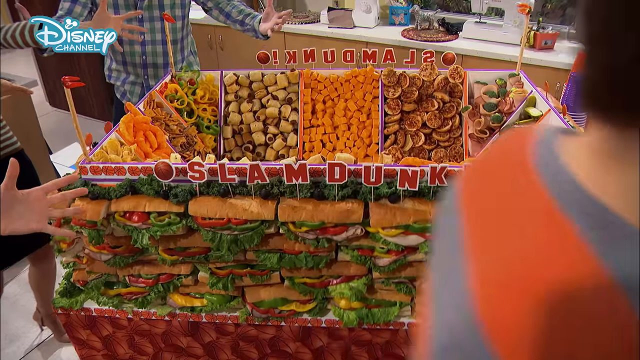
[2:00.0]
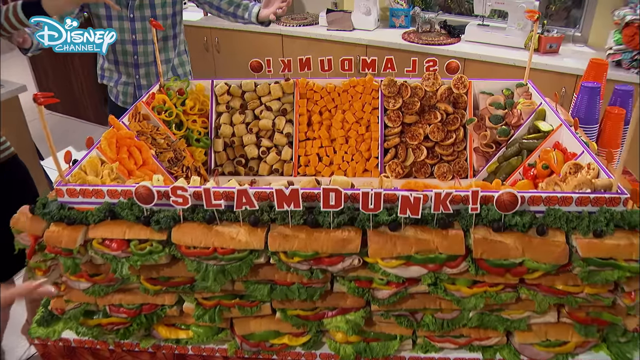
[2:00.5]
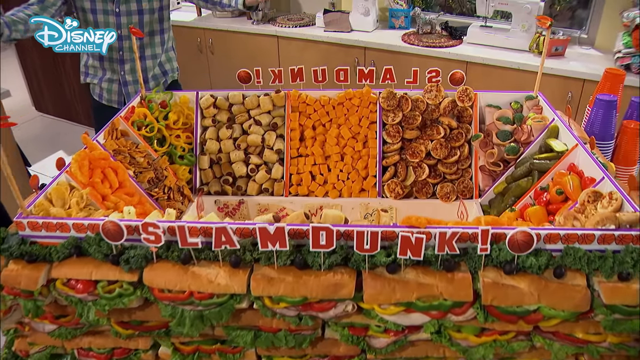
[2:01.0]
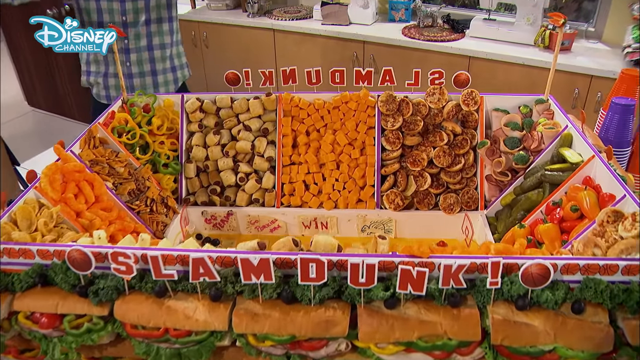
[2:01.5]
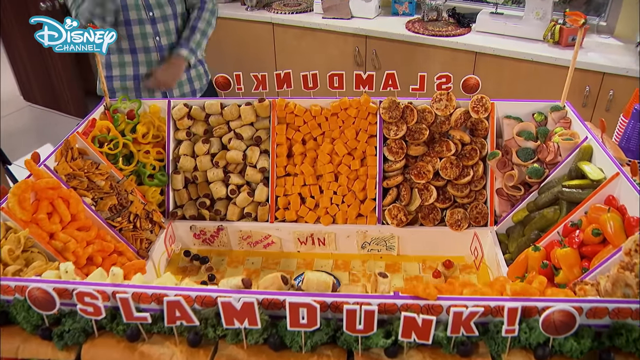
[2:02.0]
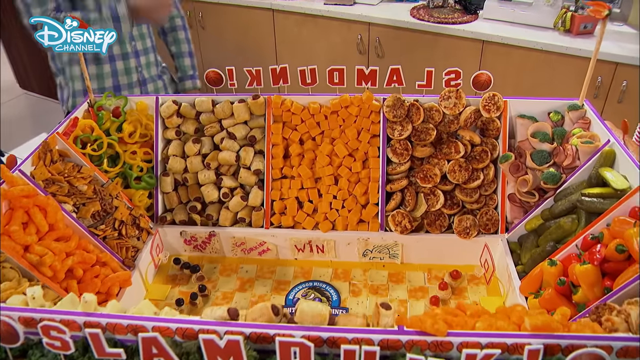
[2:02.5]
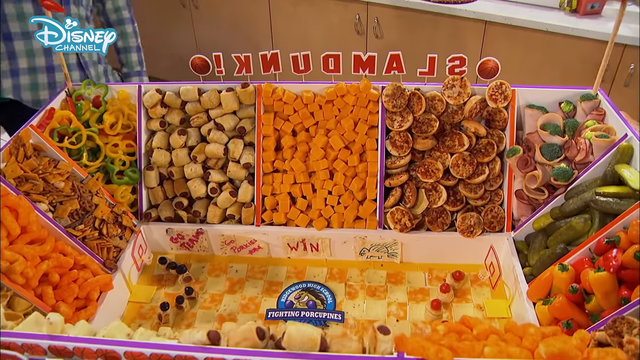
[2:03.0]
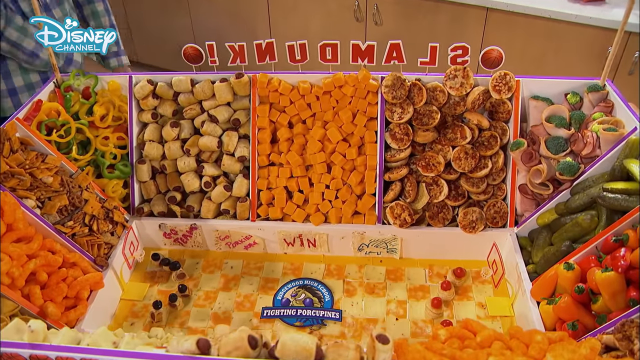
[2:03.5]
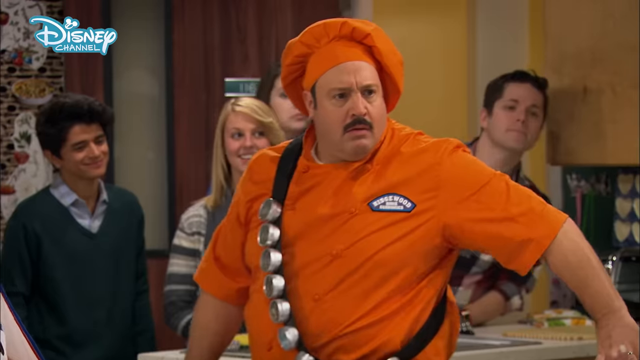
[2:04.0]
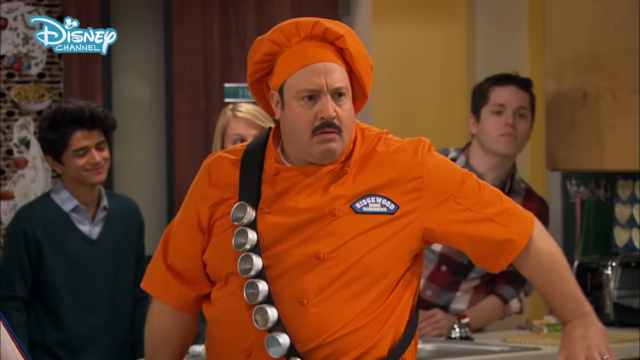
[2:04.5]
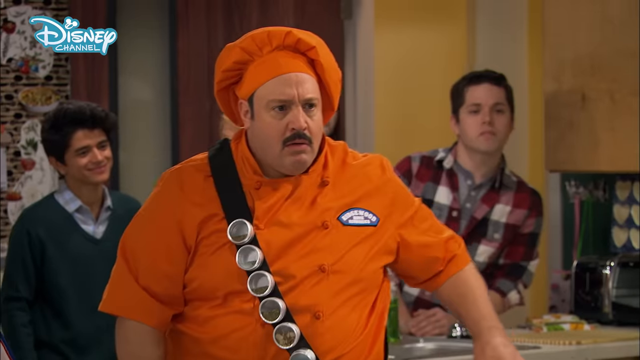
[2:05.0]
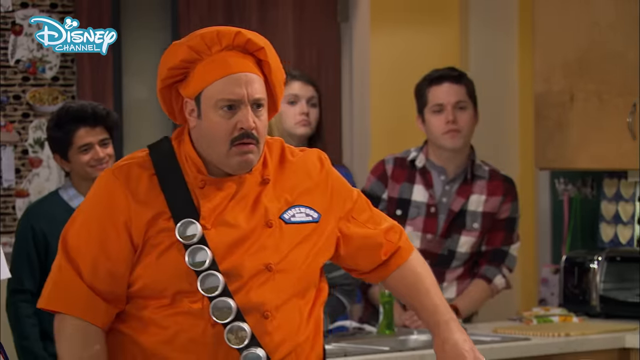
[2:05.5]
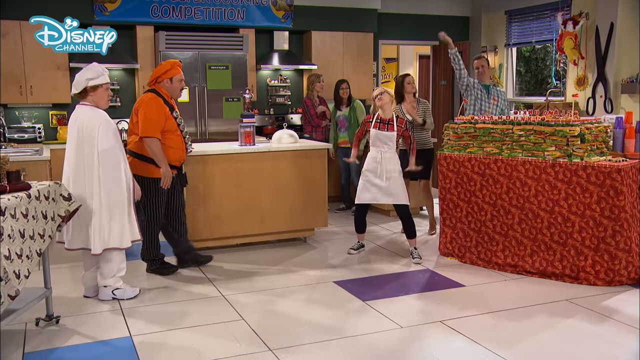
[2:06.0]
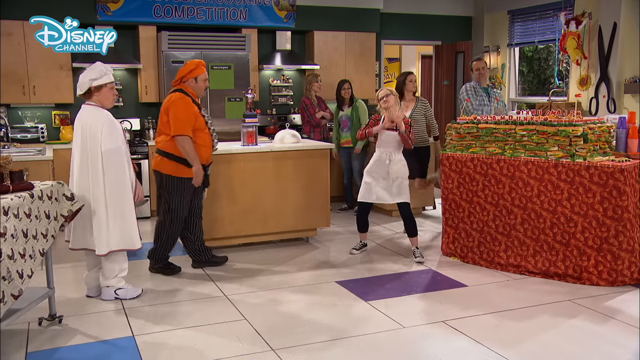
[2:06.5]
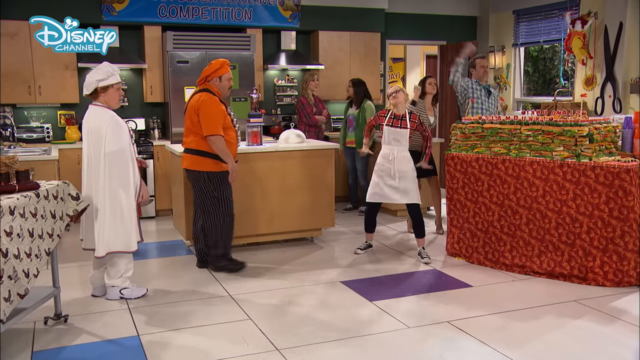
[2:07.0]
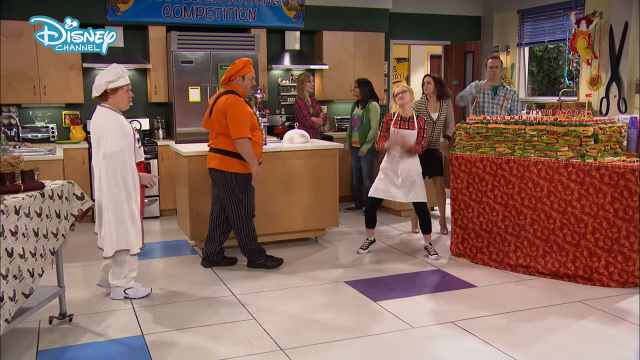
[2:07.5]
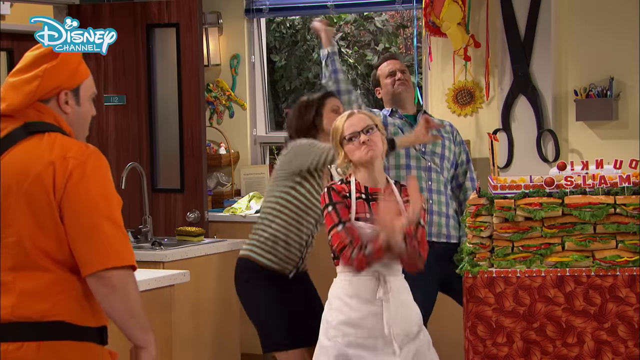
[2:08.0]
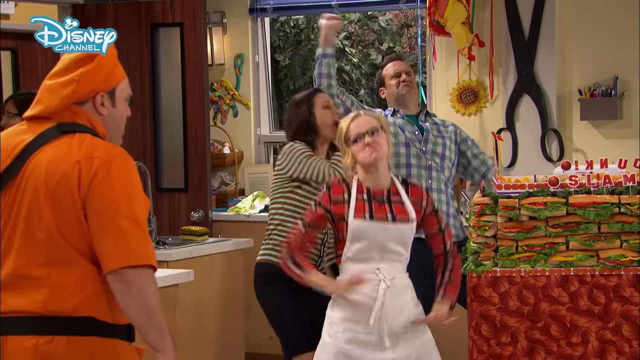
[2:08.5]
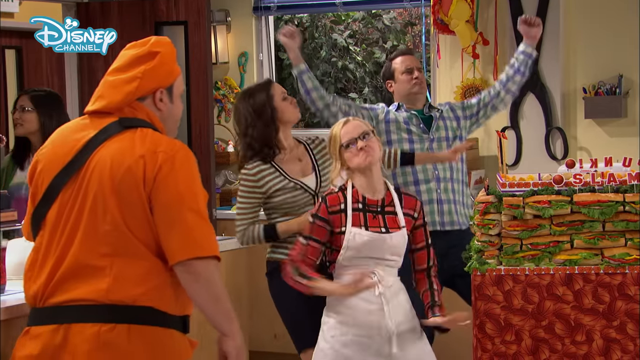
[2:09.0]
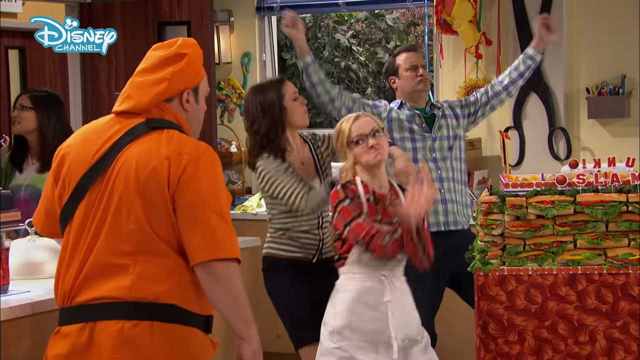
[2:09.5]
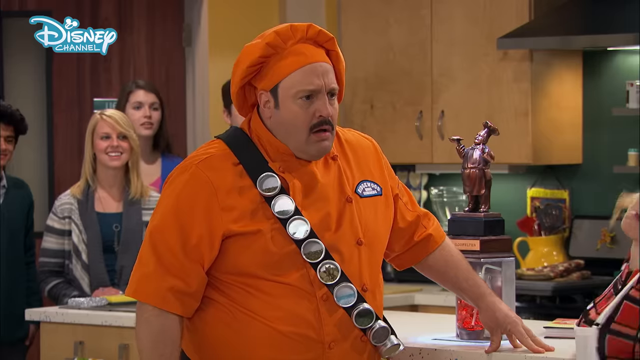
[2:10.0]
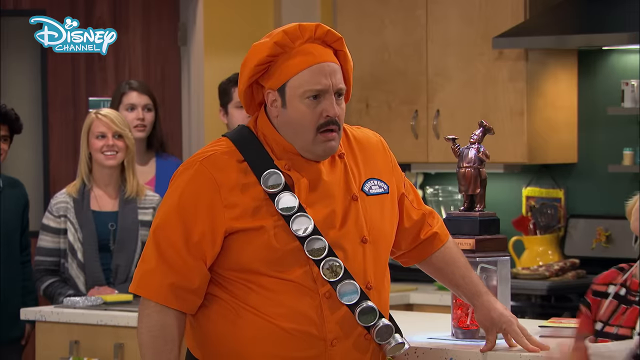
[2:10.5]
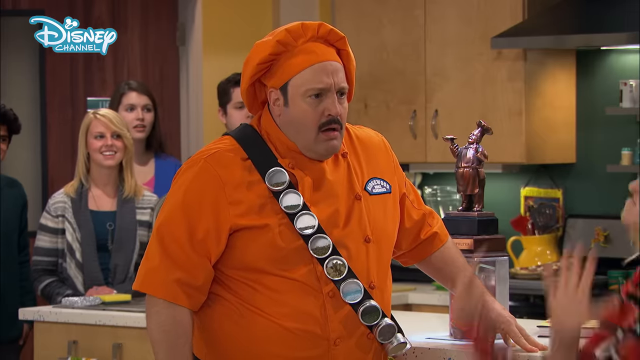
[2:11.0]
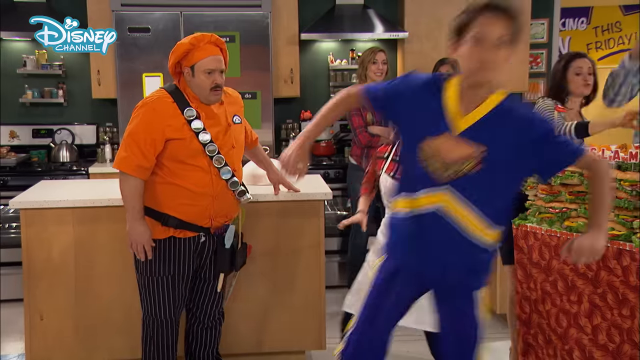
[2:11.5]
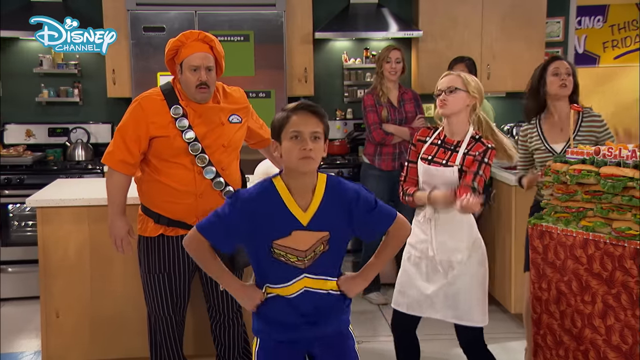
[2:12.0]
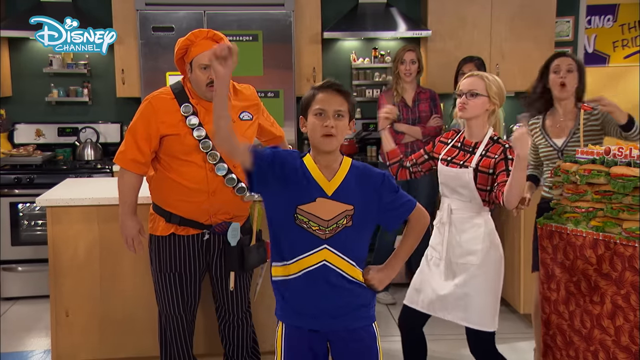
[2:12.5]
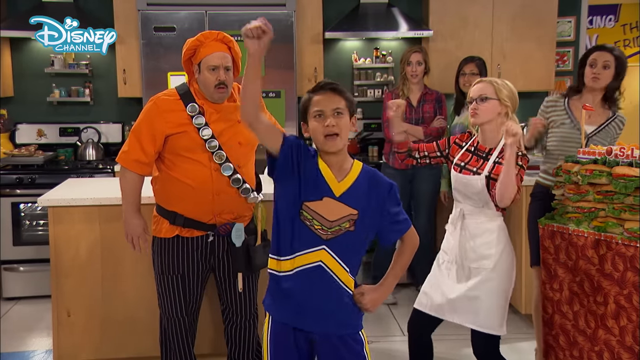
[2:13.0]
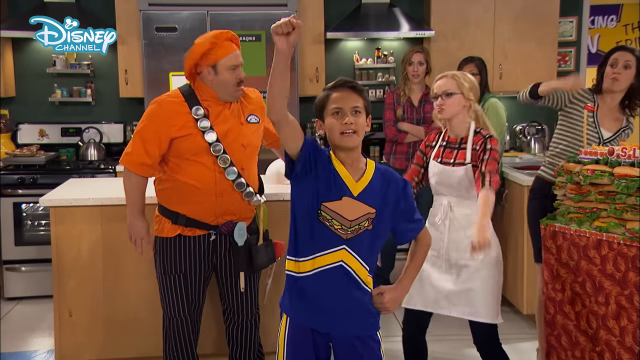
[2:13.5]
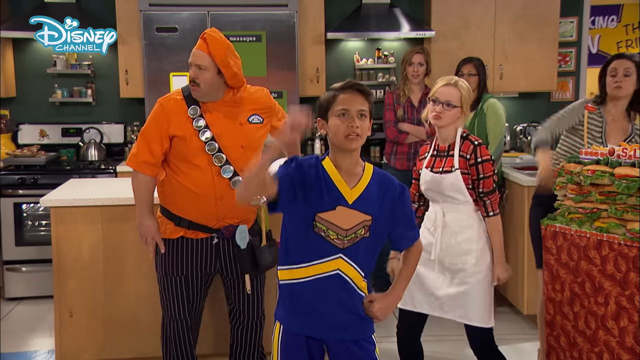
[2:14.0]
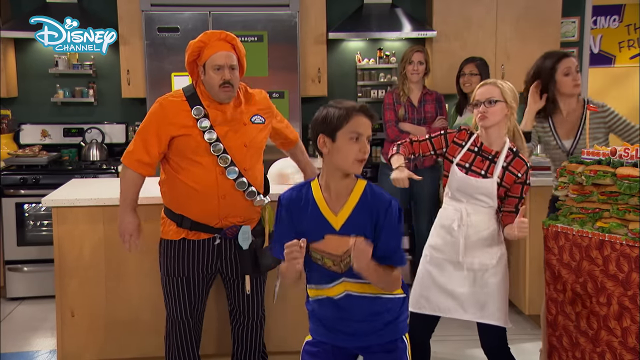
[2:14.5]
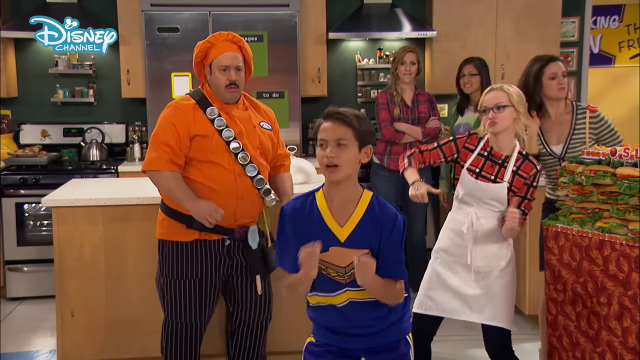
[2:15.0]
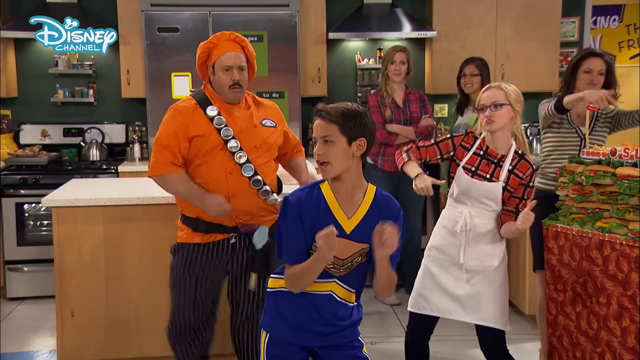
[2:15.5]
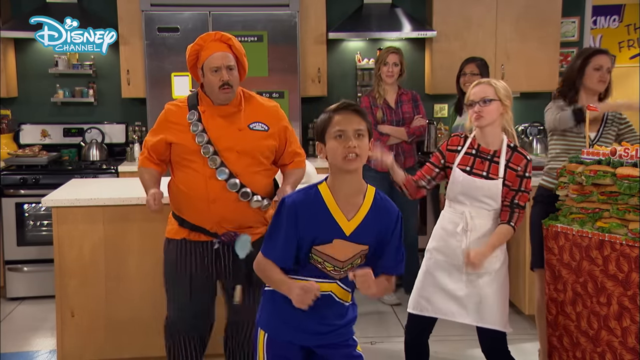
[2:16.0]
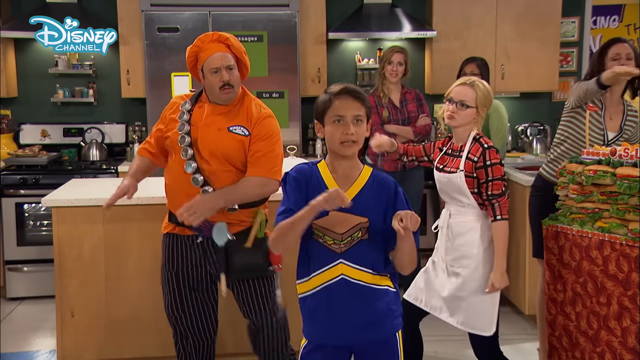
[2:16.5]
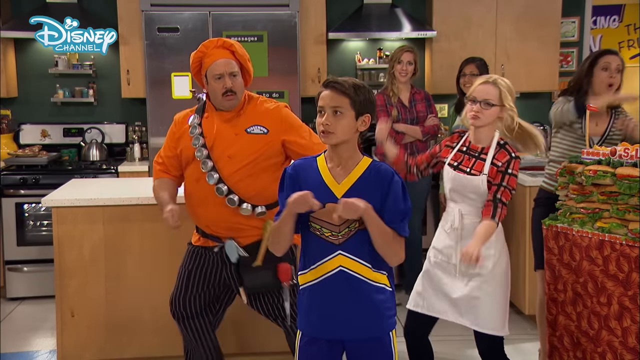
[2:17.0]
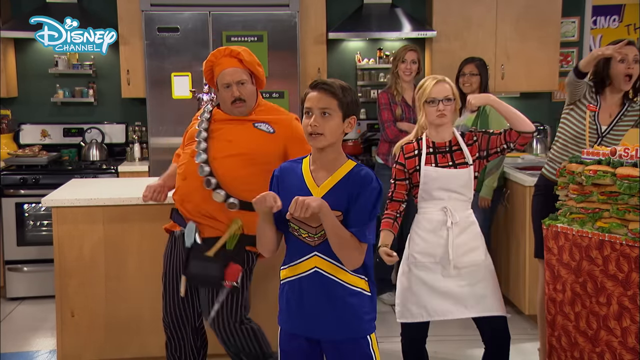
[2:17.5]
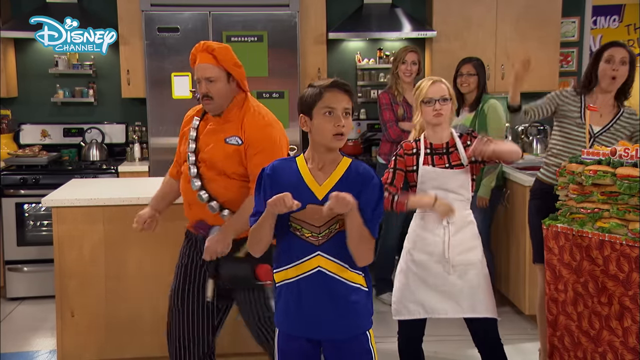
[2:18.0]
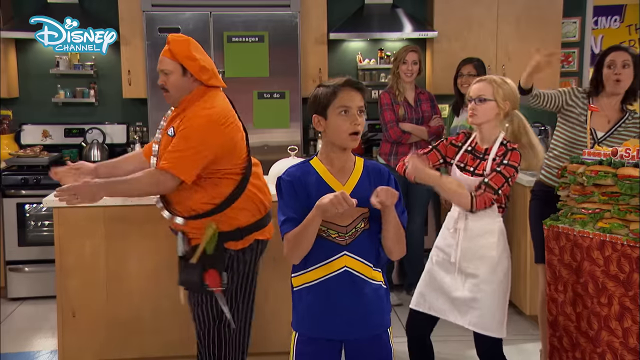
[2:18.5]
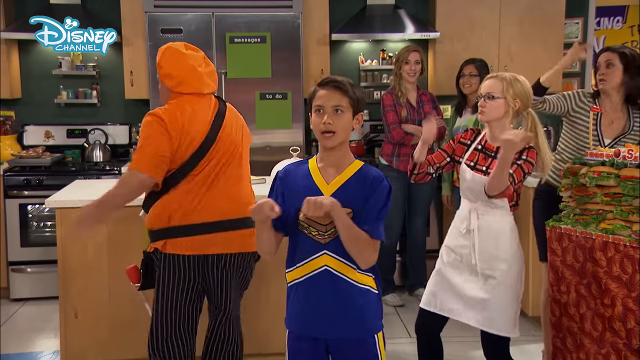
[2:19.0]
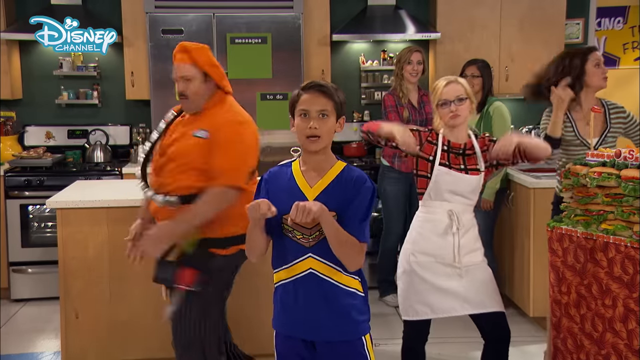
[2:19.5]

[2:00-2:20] What looks like a stadium filled with all kinds of food, including sandwiches and cheese, is shown. Two girls dance and are joined by a boy, and the chef in the orange chef's hat also dances with them. The food football stadium says "slam dunk" on it. Its outside is made up of sandwiches that look like subs, with lettuce, tomatoes, or possibly different types of peppers in them. The inside has different sections with different types of food, such as cookies, cheese, carrots, pigs in a blanket, and maybe some other vegetables. The girl named Maddie is apparently the one who made the football stadium out of food, so she is apparently the winner of the contest.